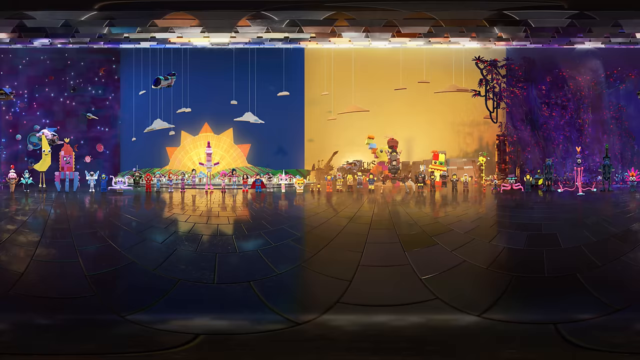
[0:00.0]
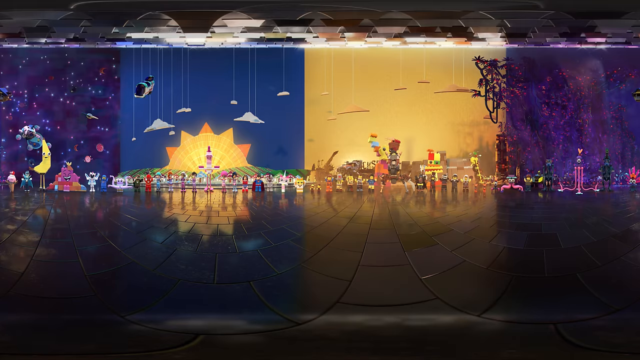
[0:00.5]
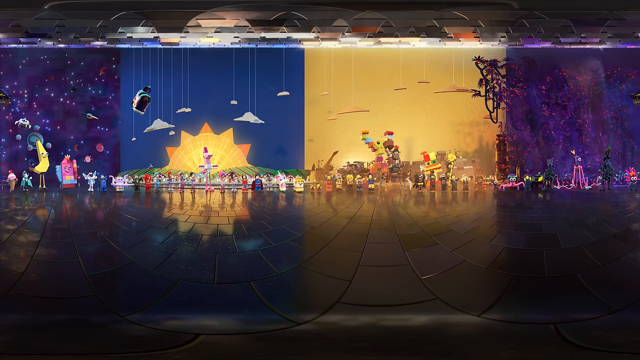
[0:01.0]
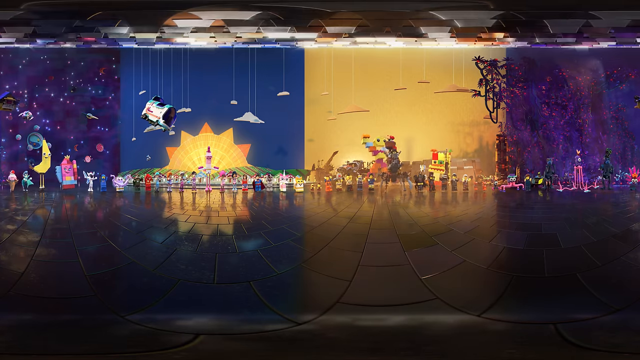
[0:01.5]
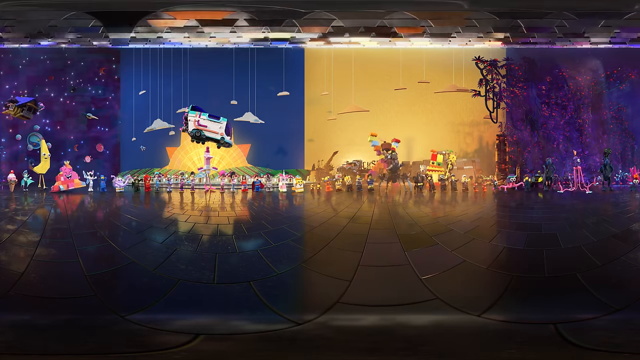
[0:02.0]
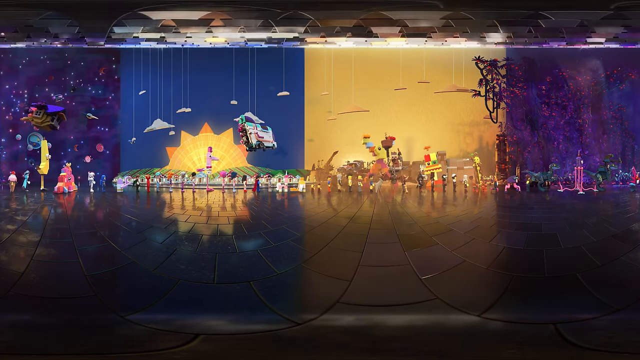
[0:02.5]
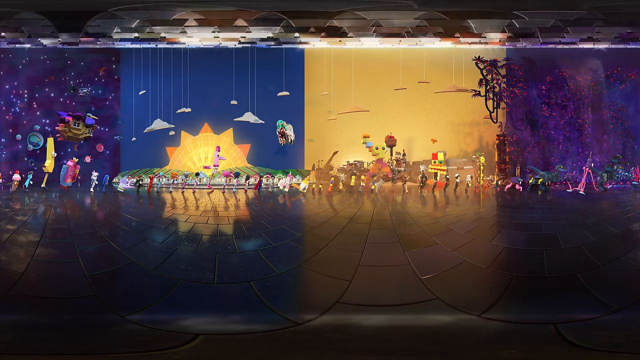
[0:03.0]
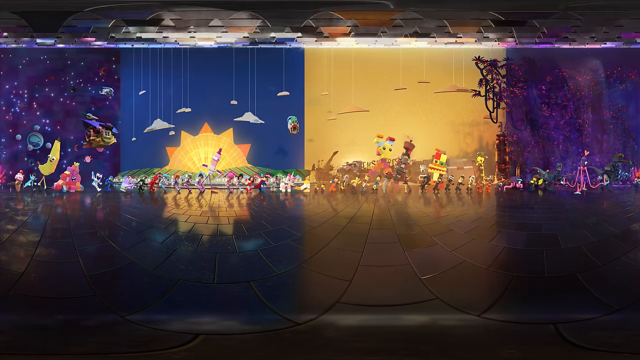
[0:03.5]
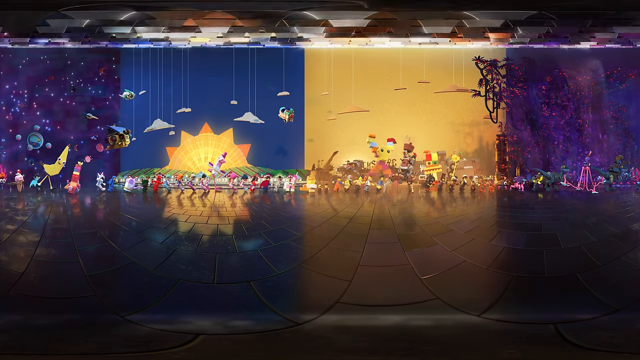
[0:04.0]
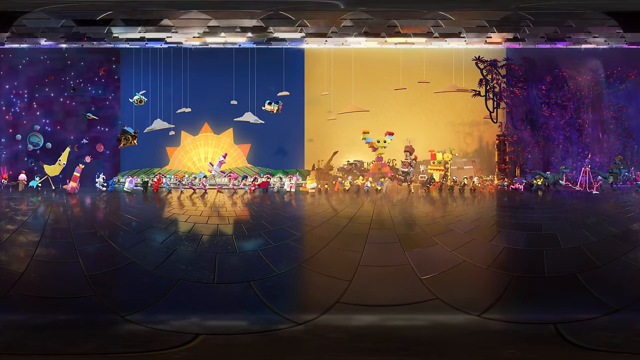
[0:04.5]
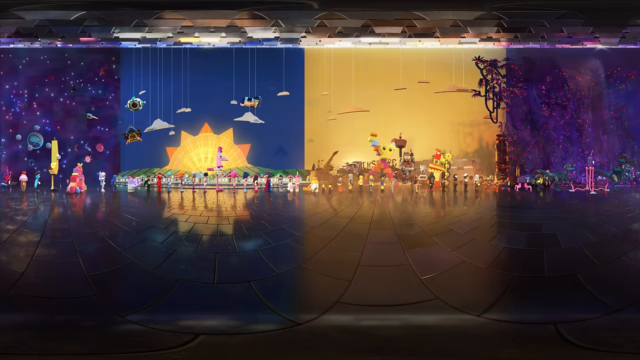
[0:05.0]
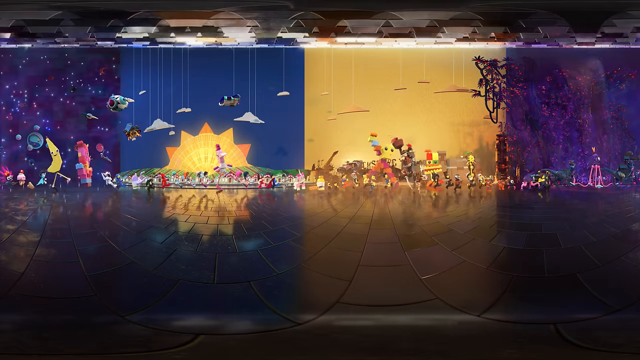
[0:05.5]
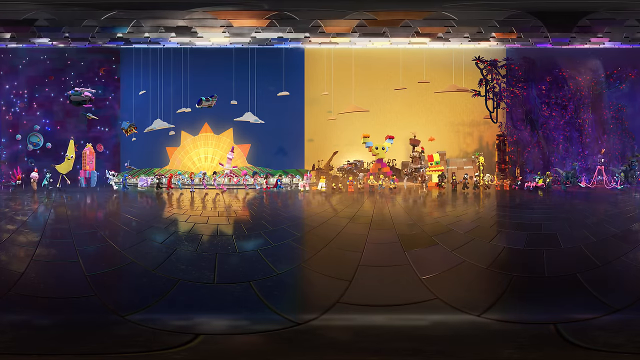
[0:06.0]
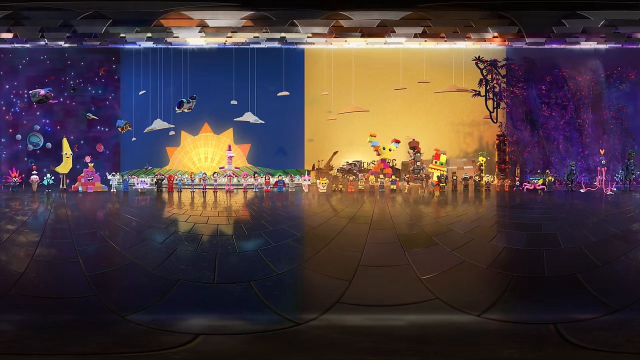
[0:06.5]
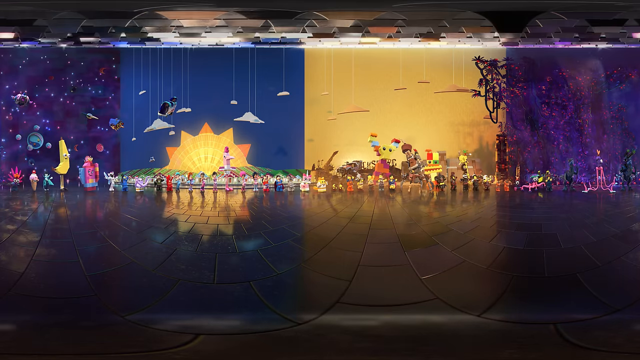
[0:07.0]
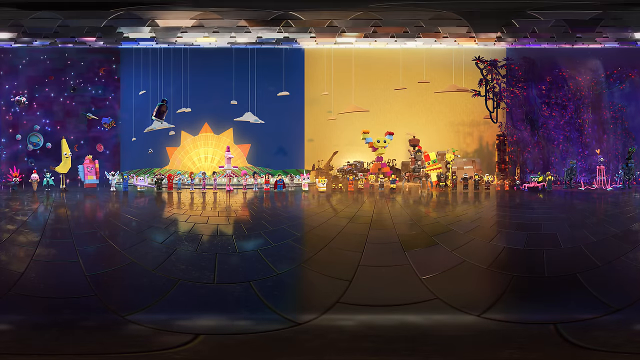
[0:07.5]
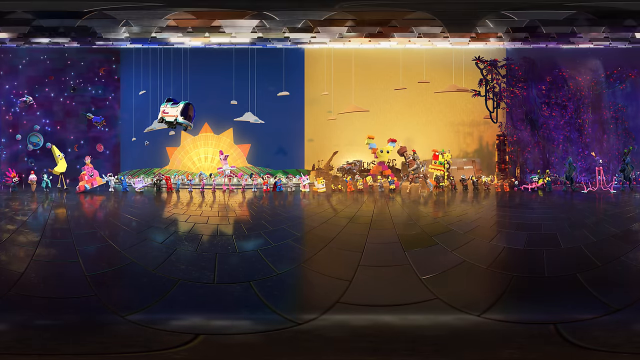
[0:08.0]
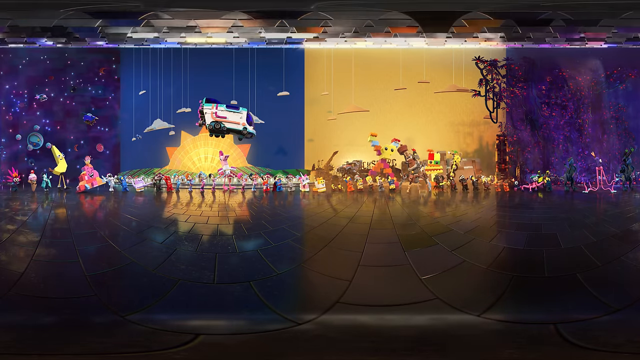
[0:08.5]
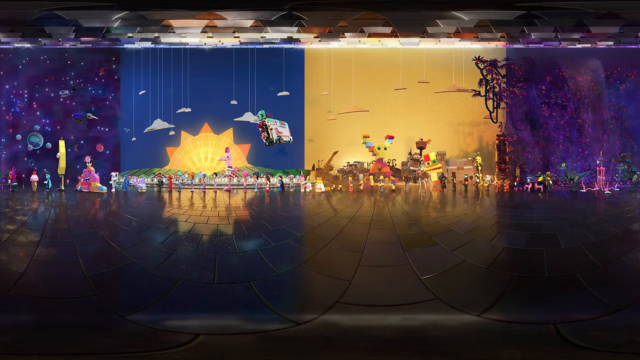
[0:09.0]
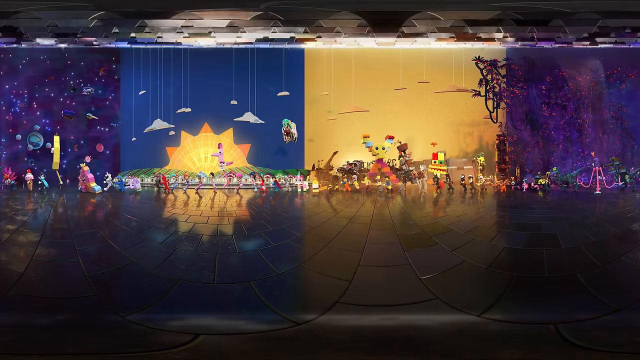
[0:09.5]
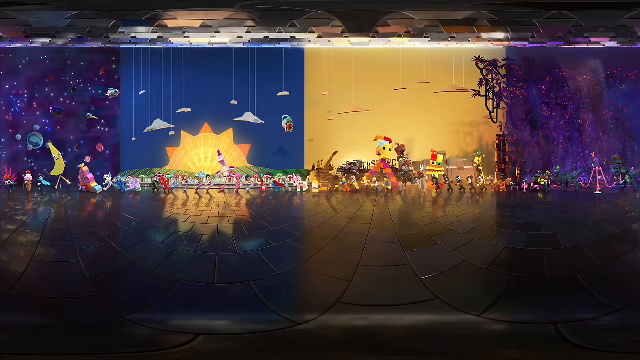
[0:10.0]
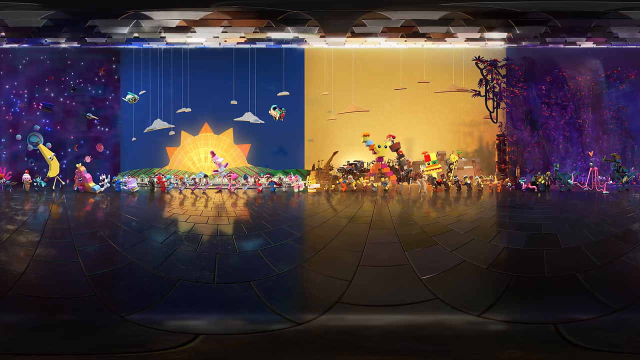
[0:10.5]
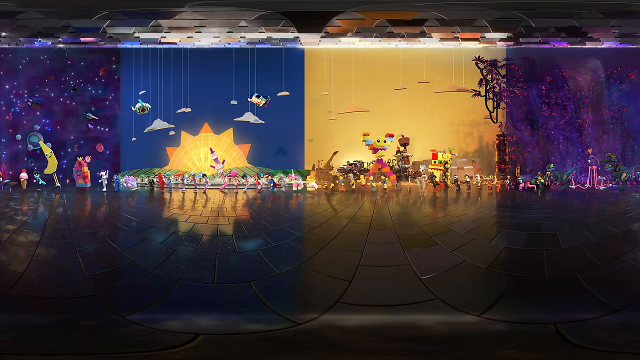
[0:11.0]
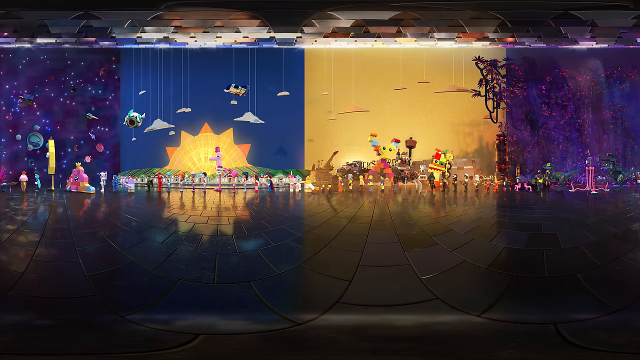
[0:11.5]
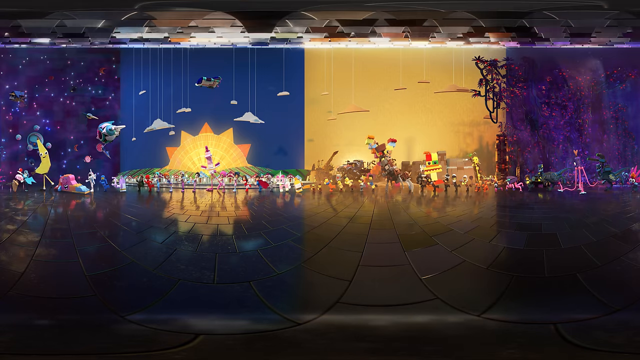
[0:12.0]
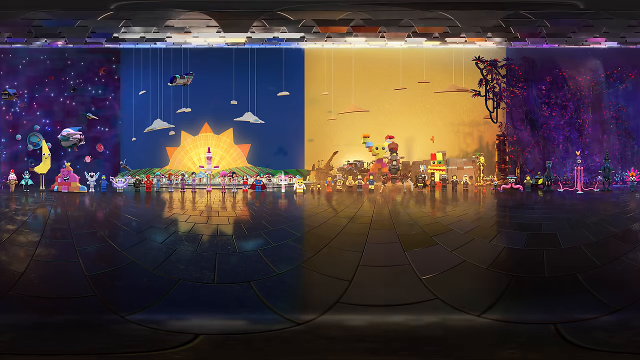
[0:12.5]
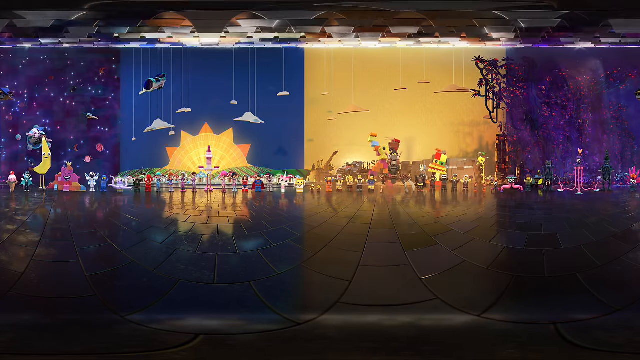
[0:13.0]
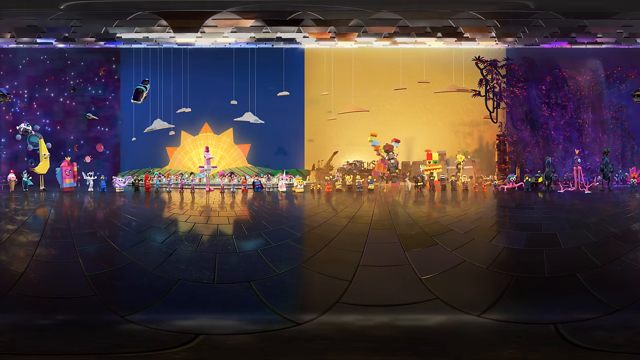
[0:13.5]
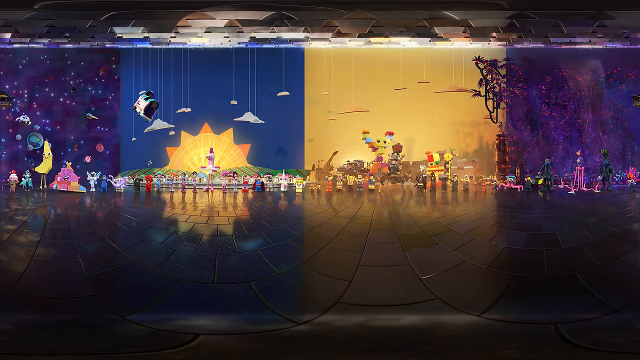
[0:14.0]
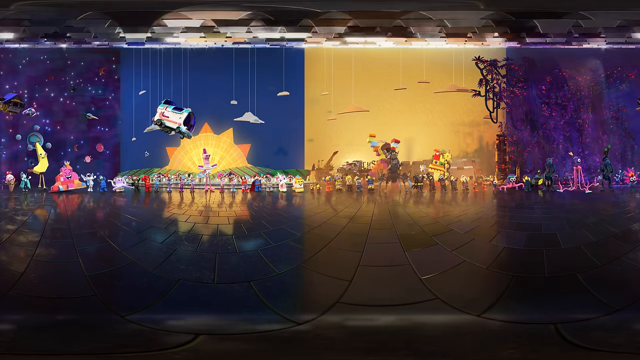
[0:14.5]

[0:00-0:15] This Lego video, titled Everything is Awesome, Dance Together 360, opens with a bunch of Lego figurines, maybe about 15 or so, standing in a line. Some are the classic yellow Lego person, while others are different, in costumes. Some bigger Lego figurines are behind the row, and they are dancing on the floor. In the back there is a yellow wall and a blue wall. Something flies through the air. It looks like it could be a Lego advertisement. The ground kind of looks like brick, but it is black.